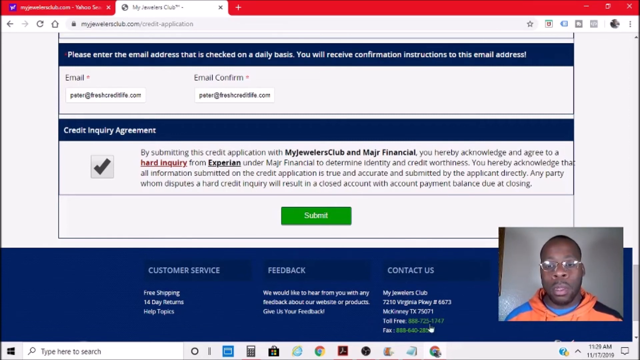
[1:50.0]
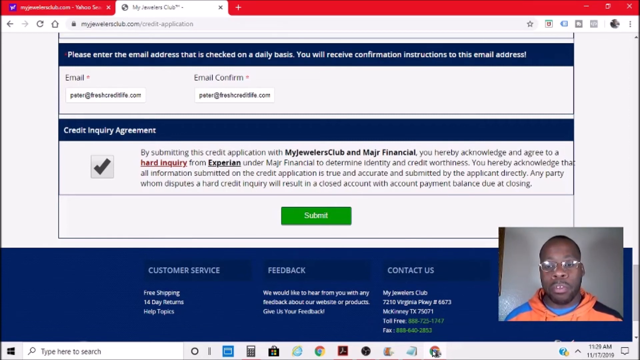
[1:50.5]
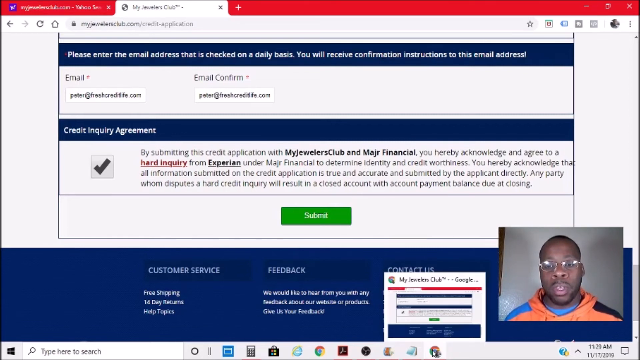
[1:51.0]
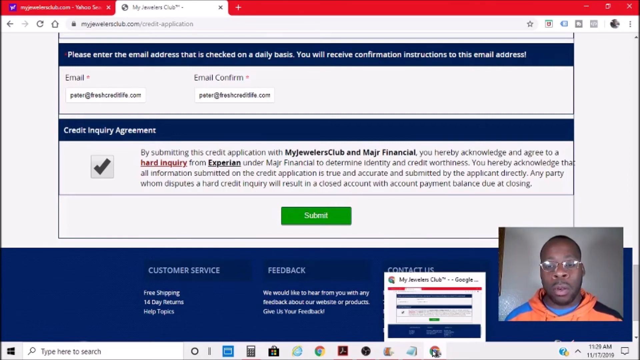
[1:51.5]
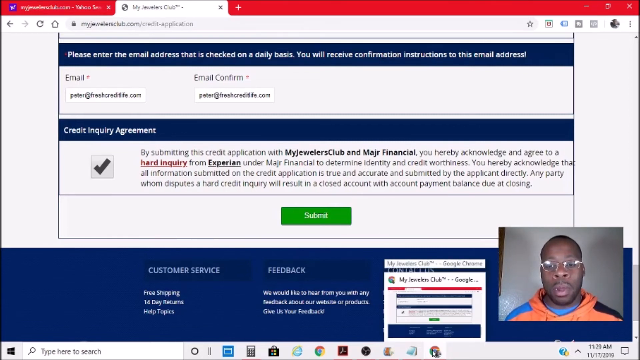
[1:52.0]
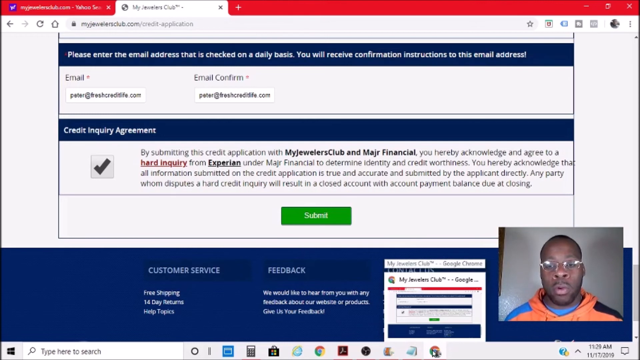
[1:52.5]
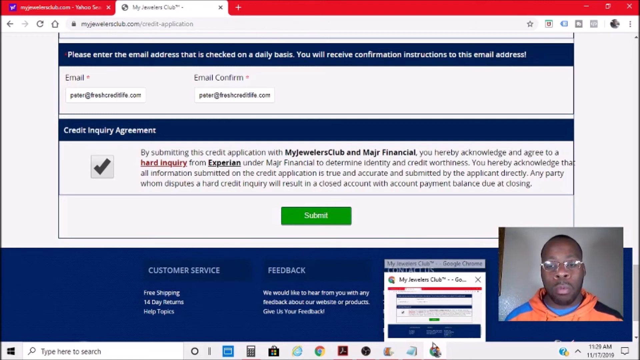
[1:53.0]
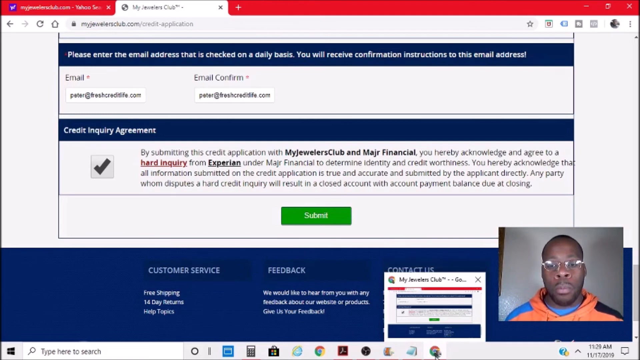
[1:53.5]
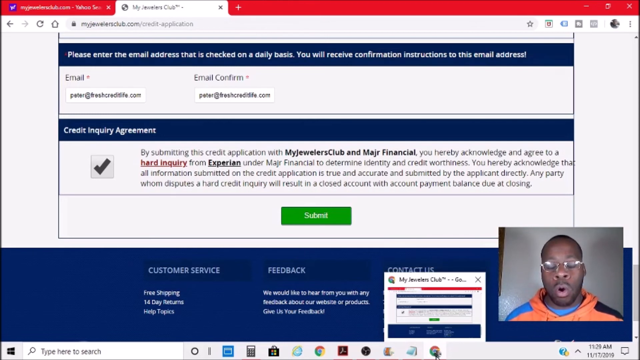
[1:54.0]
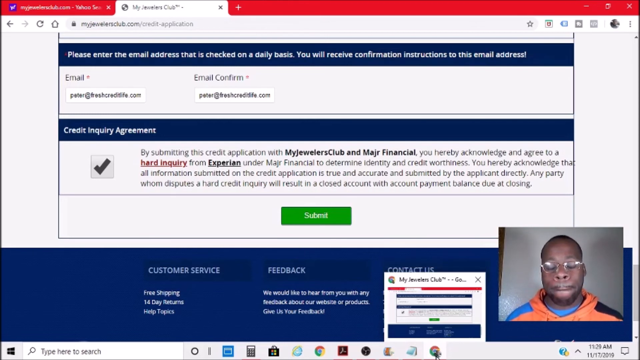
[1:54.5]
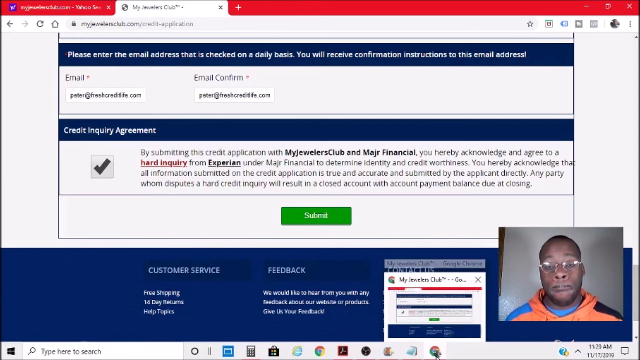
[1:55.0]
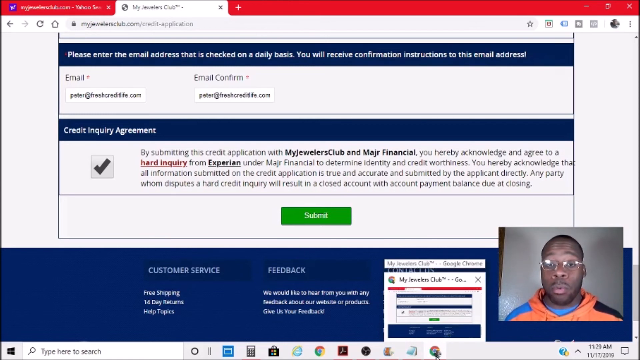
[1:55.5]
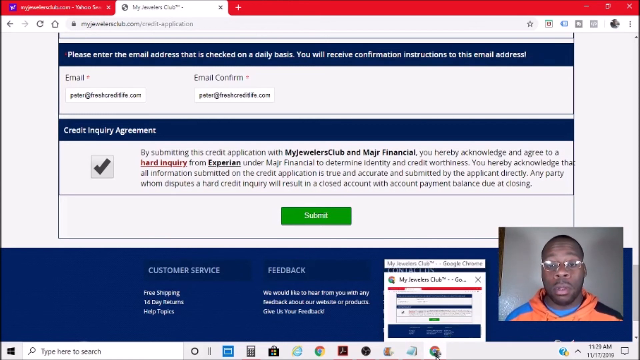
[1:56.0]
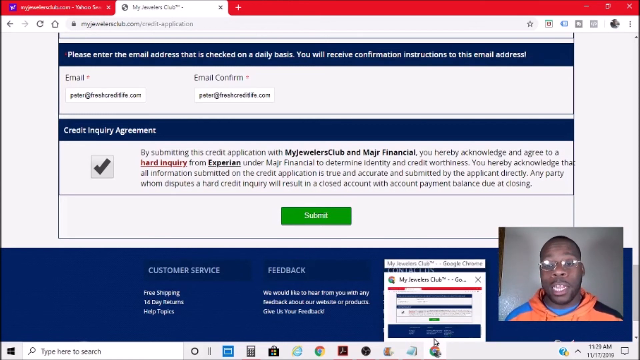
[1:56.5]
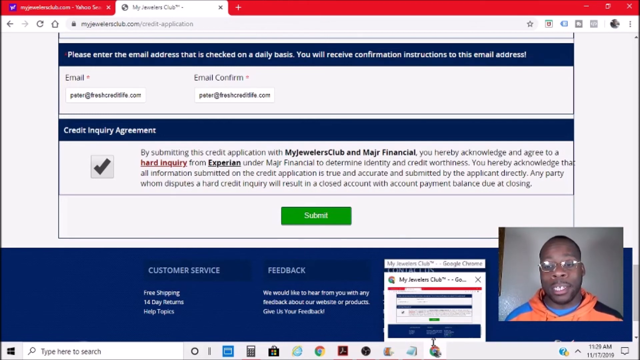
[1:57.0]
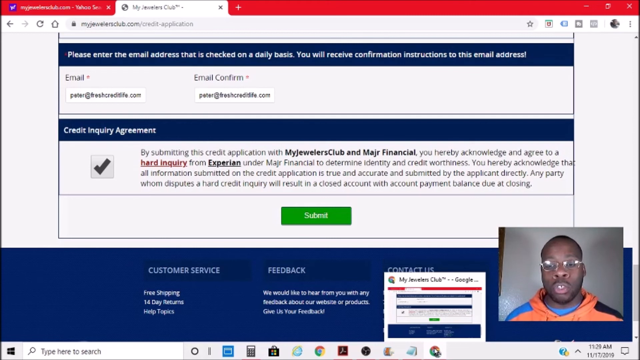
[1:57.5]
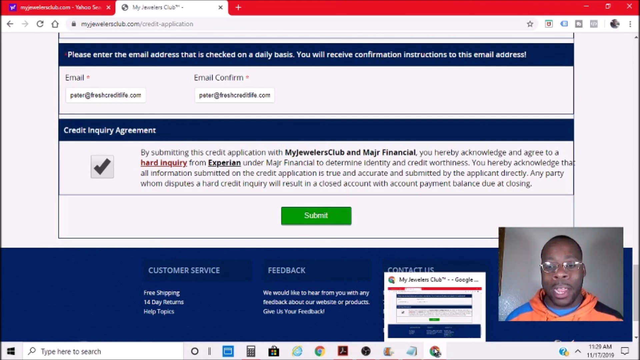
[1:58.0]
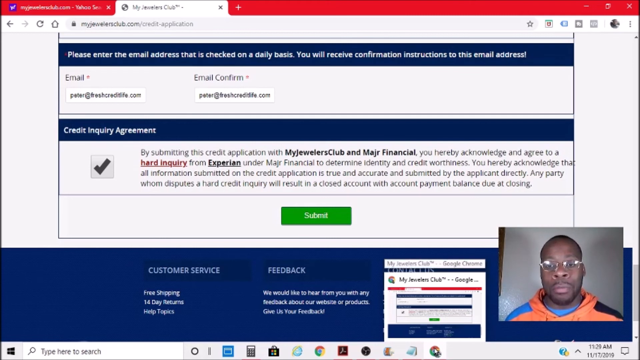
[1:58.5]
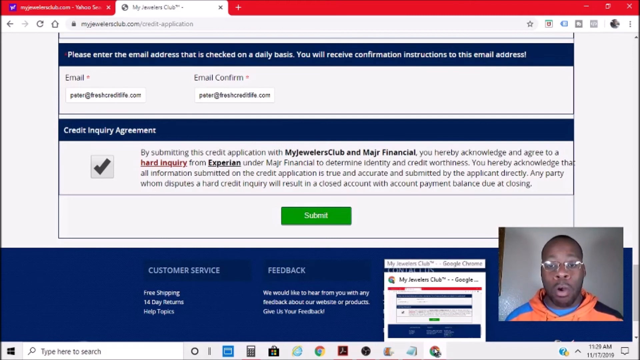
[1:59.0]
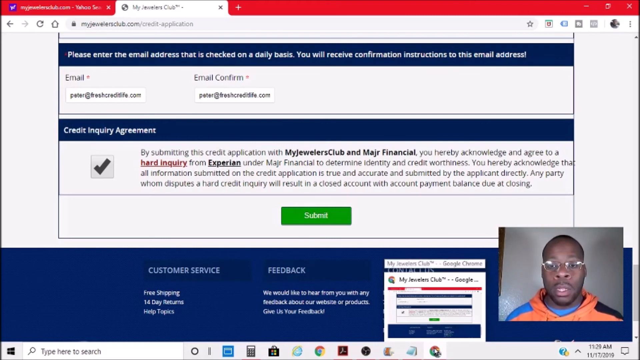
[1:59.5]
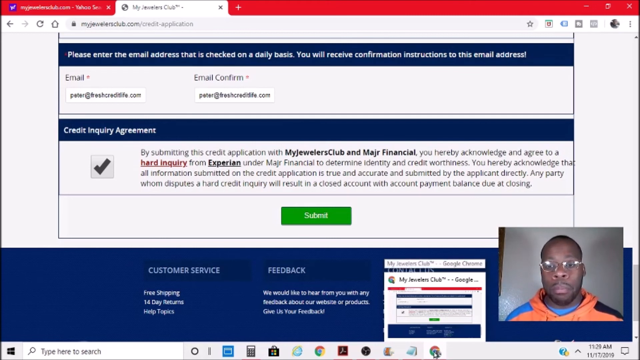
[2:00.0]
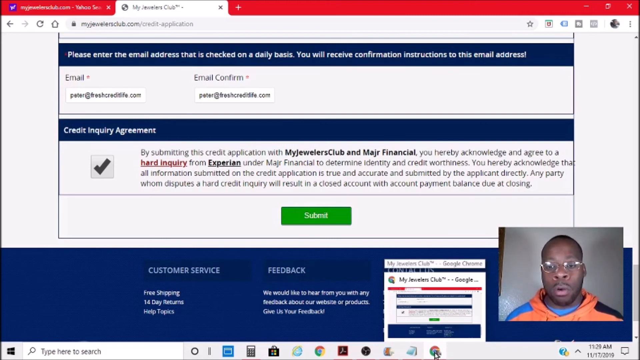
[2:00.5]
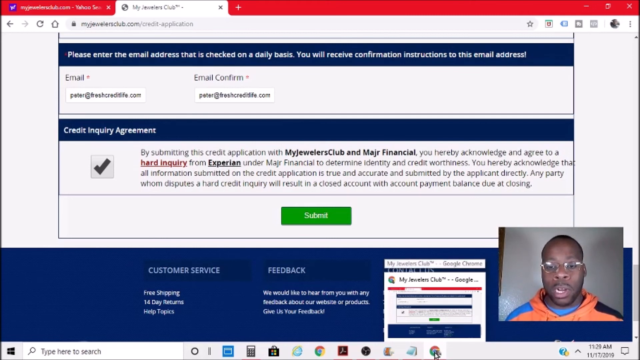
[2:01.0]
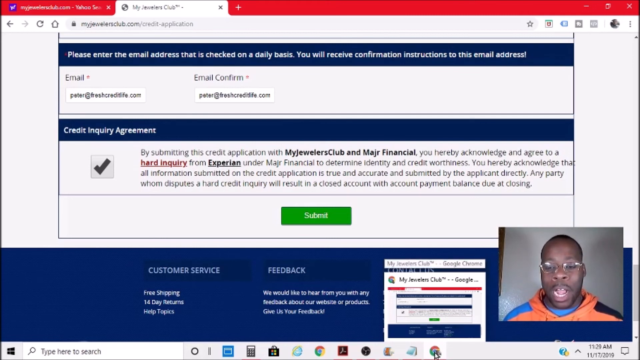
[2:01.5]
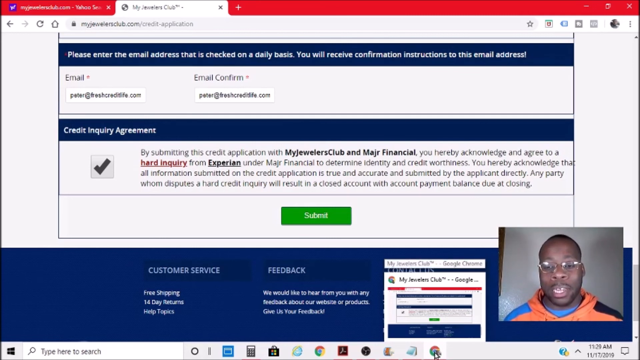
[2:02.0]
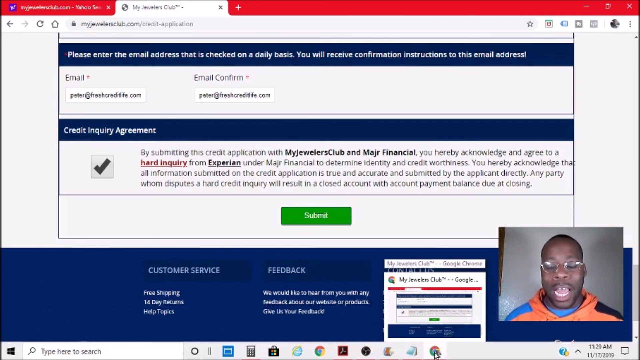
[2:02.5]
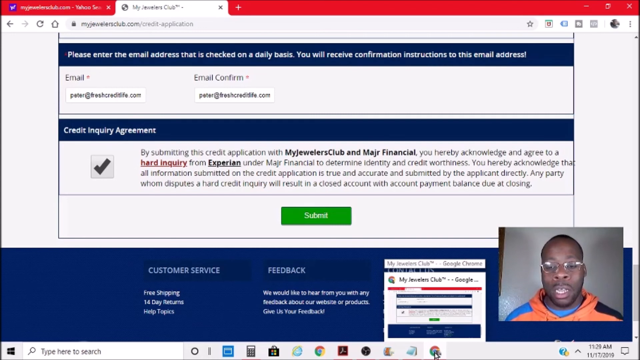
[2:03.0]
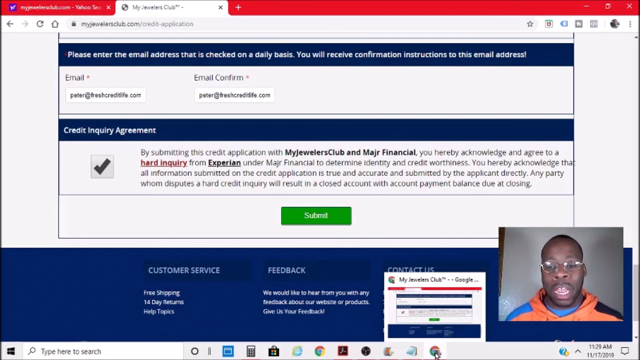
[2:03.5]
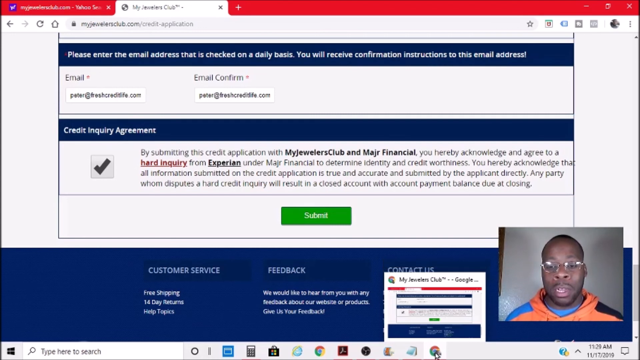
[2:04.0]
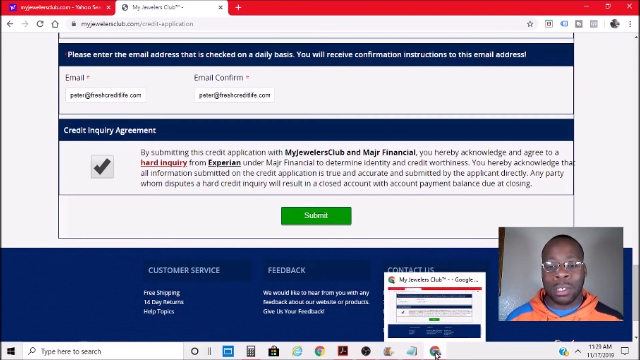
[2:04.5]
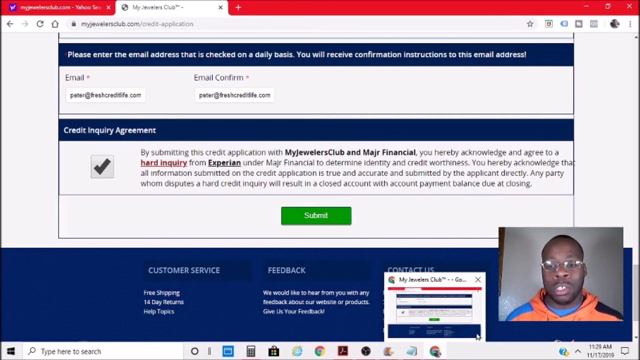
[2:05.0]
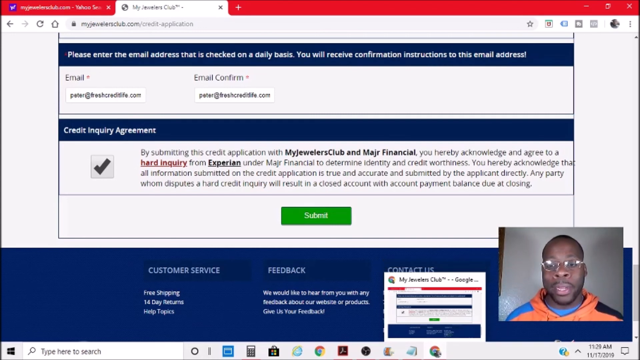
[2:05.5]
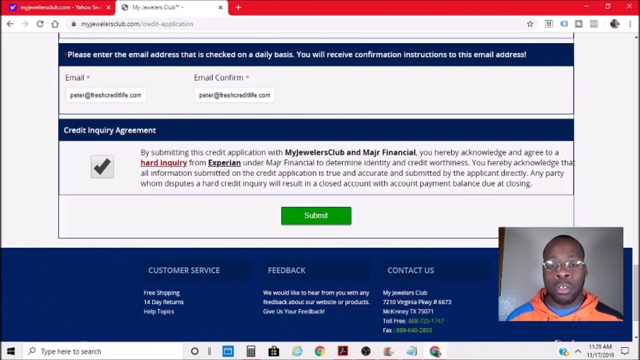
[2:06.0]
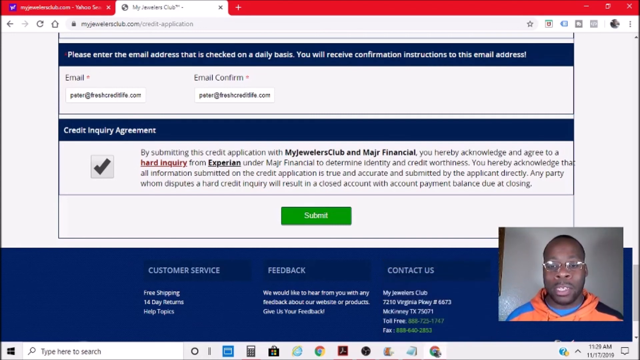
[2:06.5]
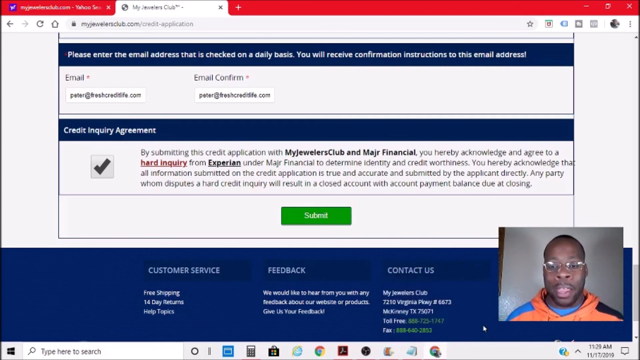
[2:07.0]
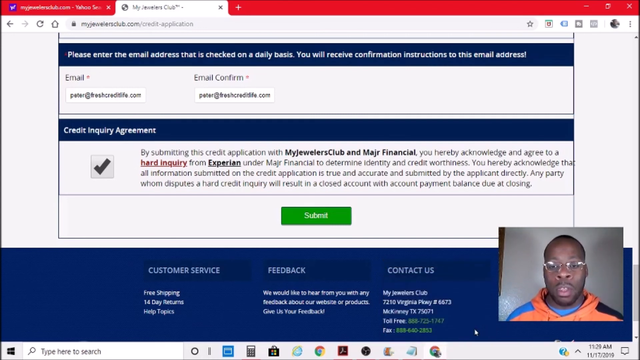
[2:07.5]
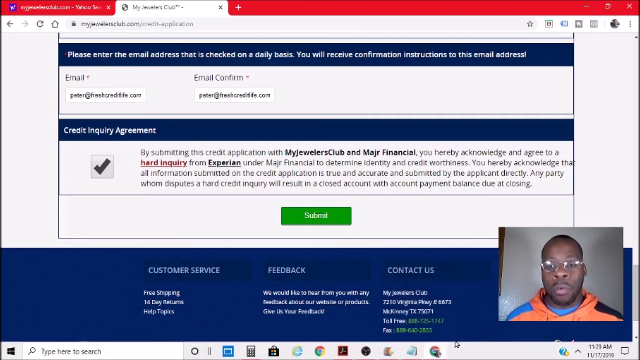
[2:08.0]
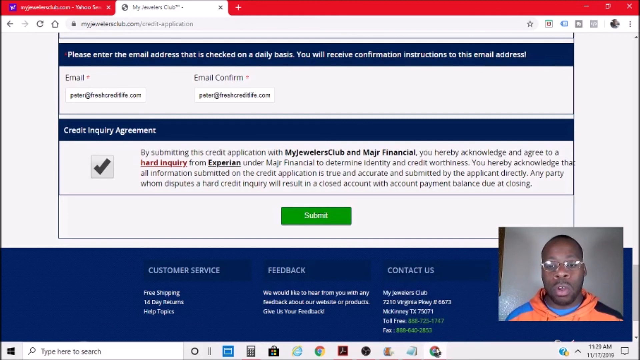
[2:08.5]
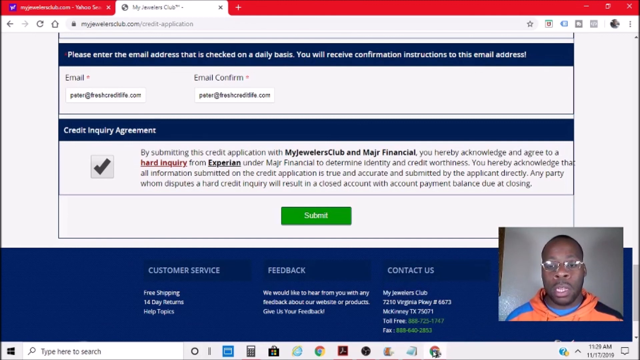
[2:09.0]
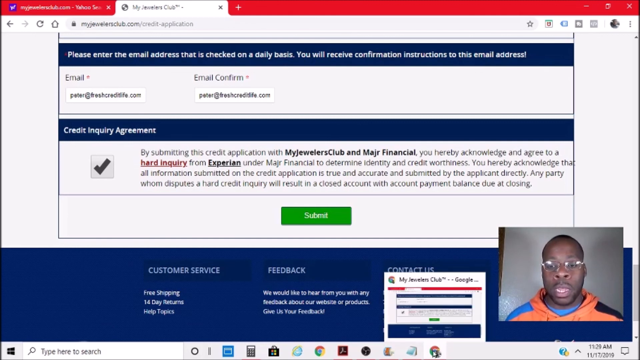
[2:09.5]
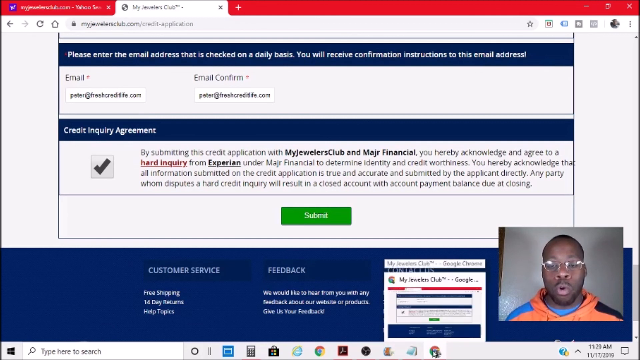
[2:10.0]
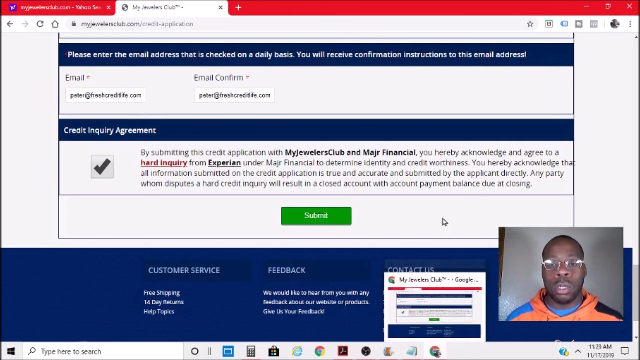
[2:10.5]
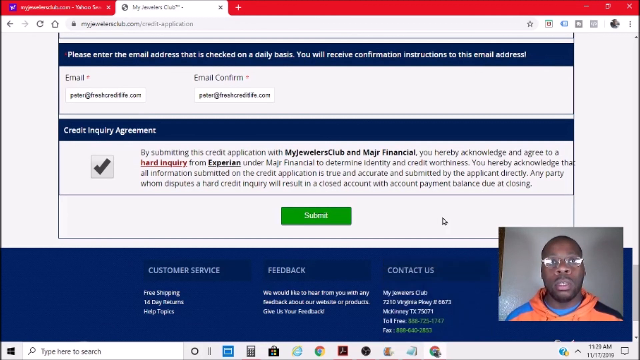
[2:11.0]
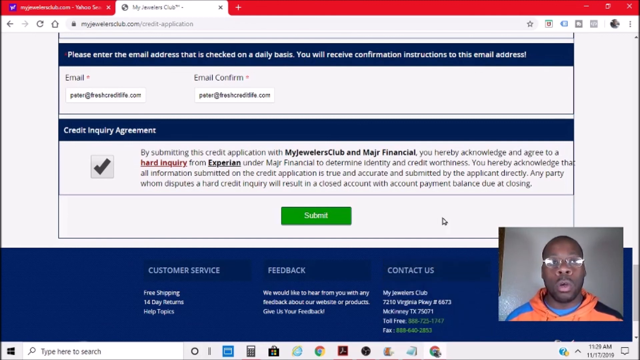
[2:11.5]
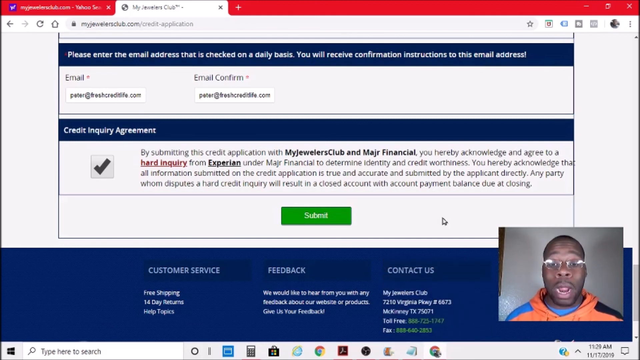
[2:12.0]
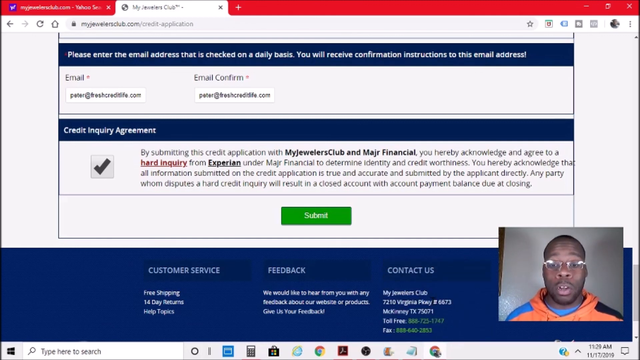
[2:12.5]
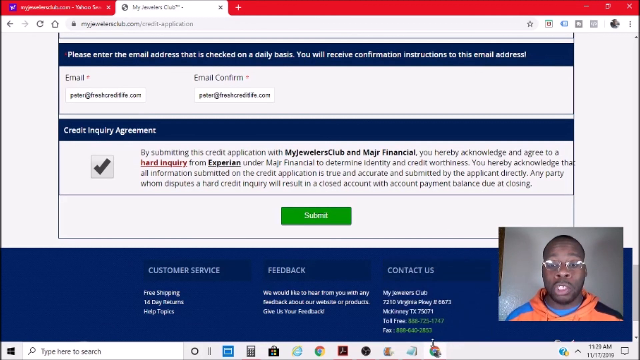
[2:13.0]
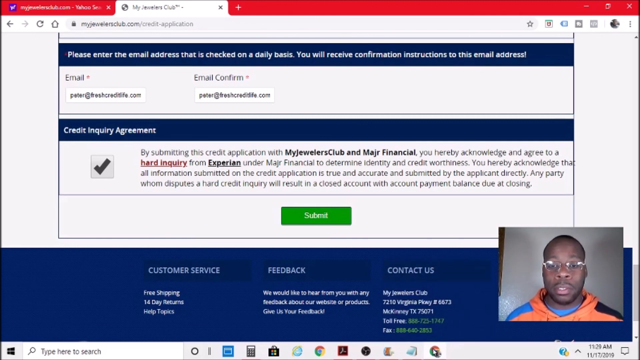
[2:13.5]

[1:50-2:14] On the My Jewelers Club website, a black man with glasses talks in the lower right-hand corner; he wears an orange sweatshirt with a blue stripe on the right shoulder and a black stripe on the left, over a blue t-shirt. Someone moves the cursor and checks off agreement to a credit inquiry; "hard inquiry" appears in red, from Experian, with text beginning "by submitting this credit application with my jewelers club" acknowledging agreement to the hard inquiry. The cursor keeps scrolling around, and after the agreement is checked an application appears asking for gender, name, social security number and birthday. The browser at the top reads "My jewelers club".